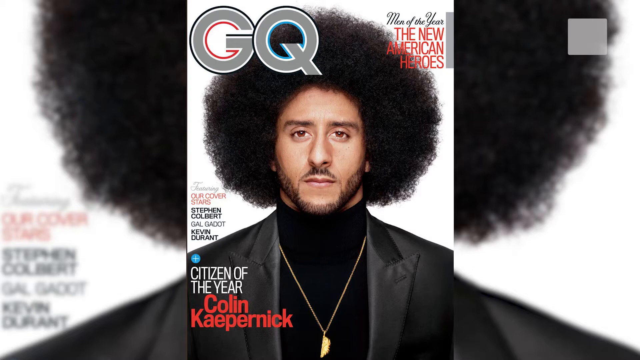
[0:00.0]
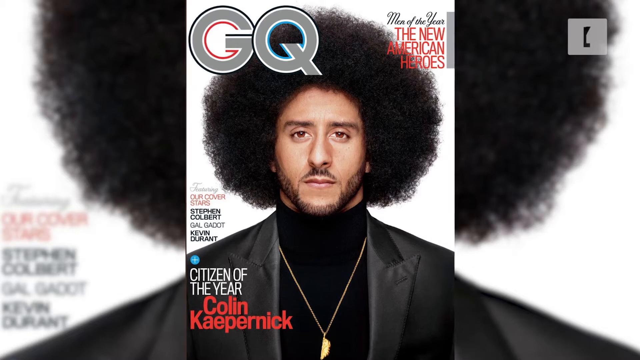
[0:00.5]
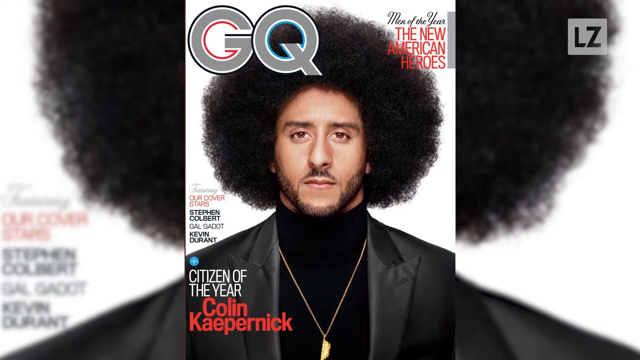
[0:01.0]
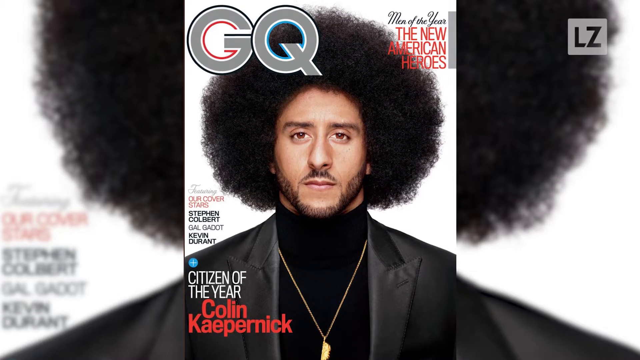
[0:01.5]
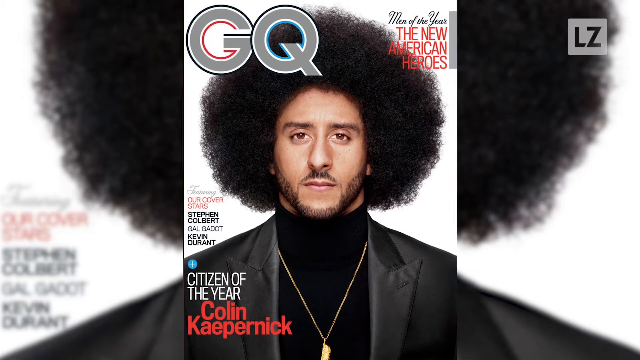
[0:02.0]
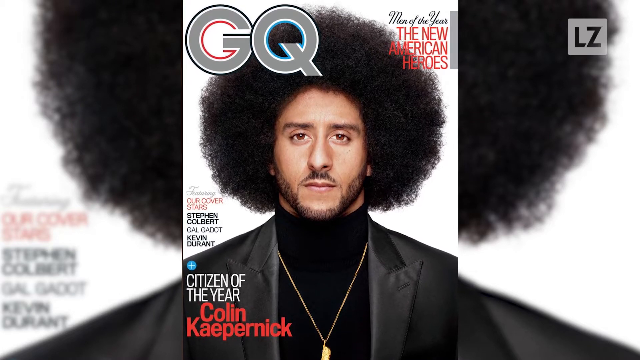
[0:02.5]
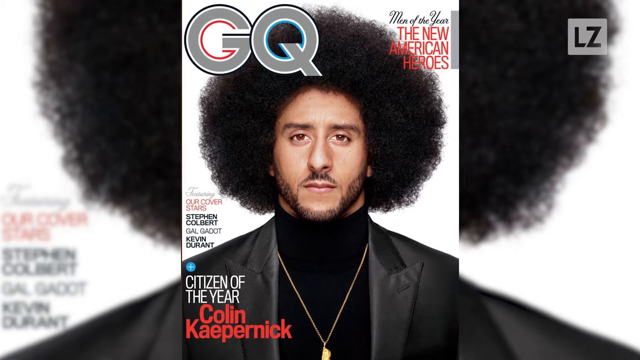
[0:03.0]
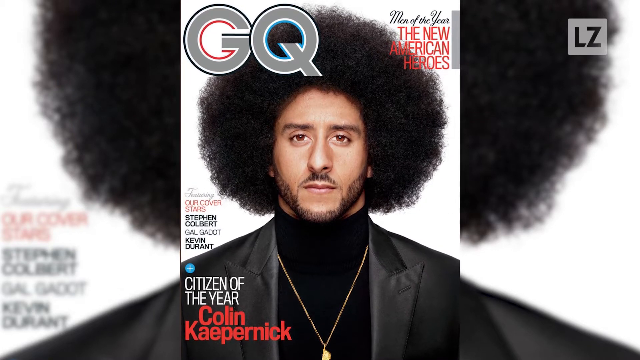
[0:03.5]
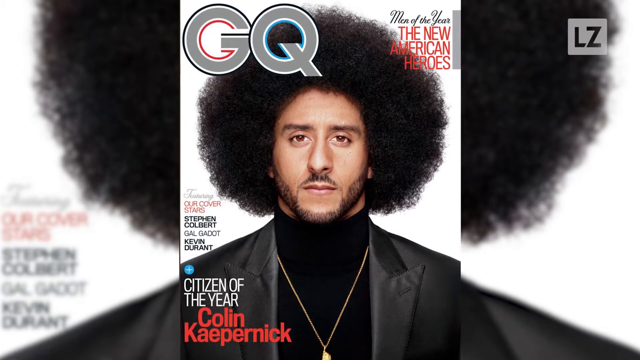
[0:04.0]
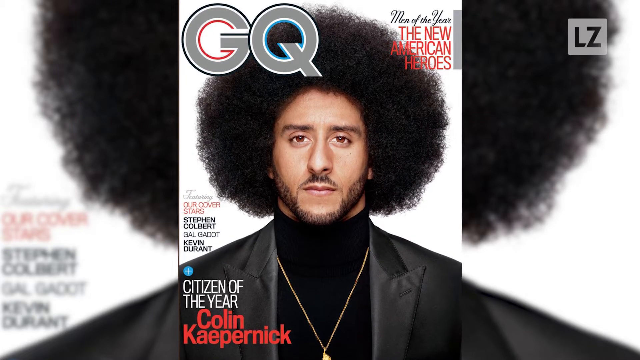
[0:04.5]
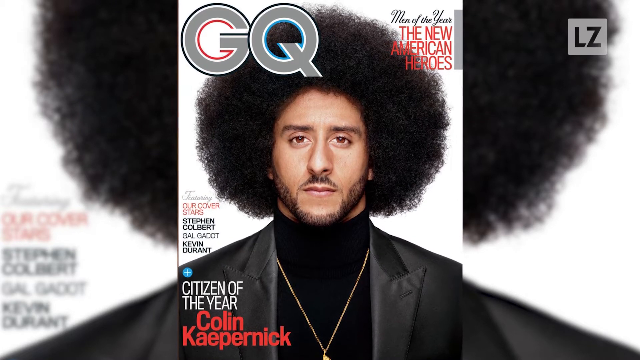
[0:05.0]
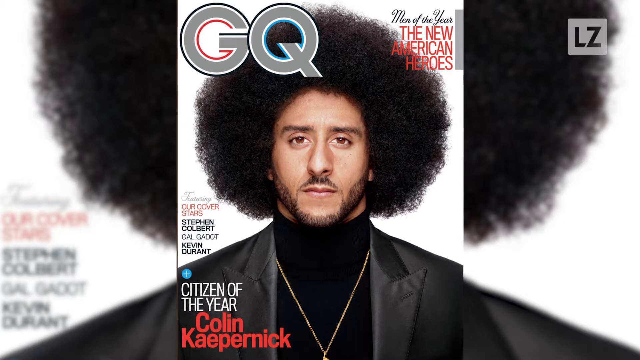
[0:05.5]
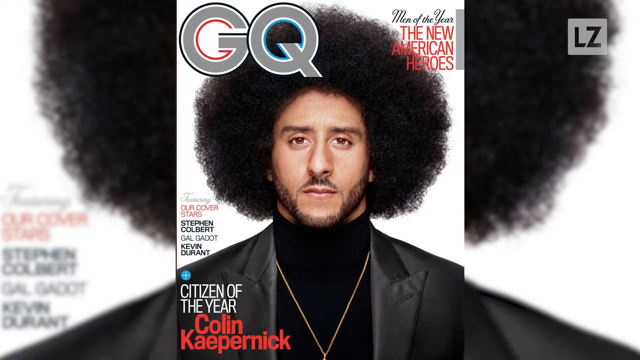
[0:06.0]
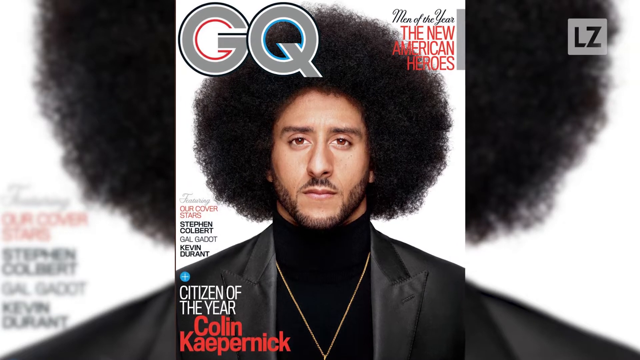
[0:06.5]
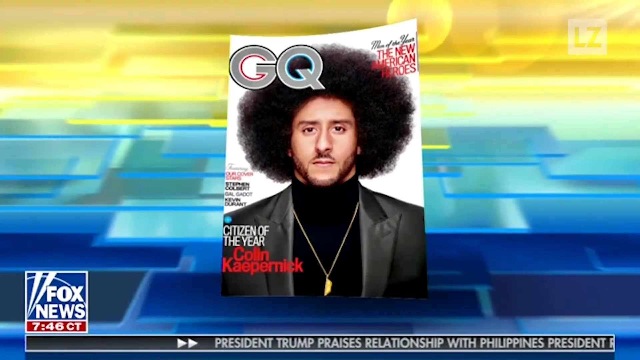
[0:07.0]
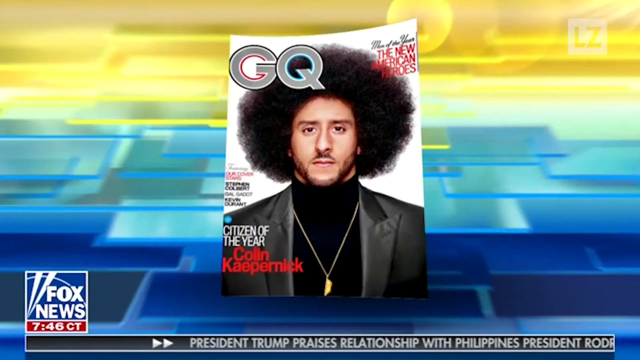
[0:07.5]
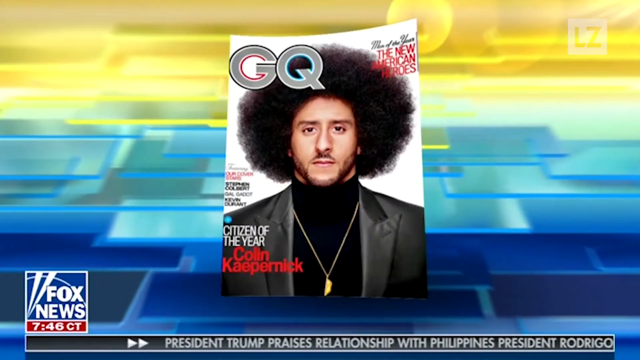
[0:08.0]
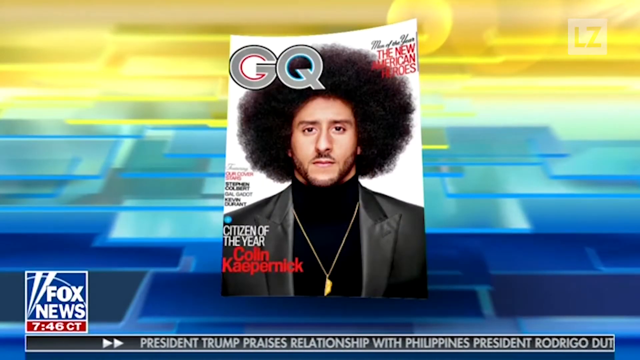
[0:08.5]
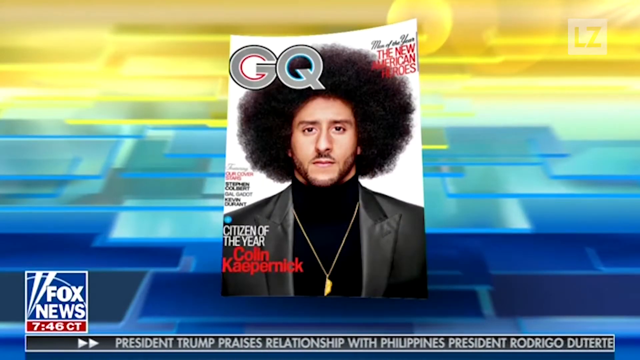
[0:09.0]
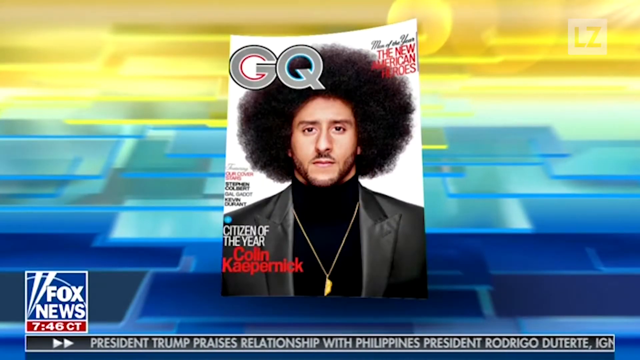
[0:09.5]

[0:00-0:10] A GQ magazine cover fills the screen. It features Colin Kaepernick, with the headline "Citizen of the Year" beneath his name. Other names on the cover as Men of the Year are Stephen Colbert, Gal Gadot and Kevin Durant. The image then shrinks to a small box on the left side of the screen, revealing a Fox News studio background with the Fox News logo and a news ticker at the bottom reading "President Trump praises relationship with Philippines President Rodrigo". The video then shows the GQ magazine cover with three different versions of the Men of the Year covers, featuring Stephen Colbert, Kevin Durant and Gal Gadot. The man on the magazine cover wears a black jacket and a black polo neck t-shirt, and he has black Afro hair.